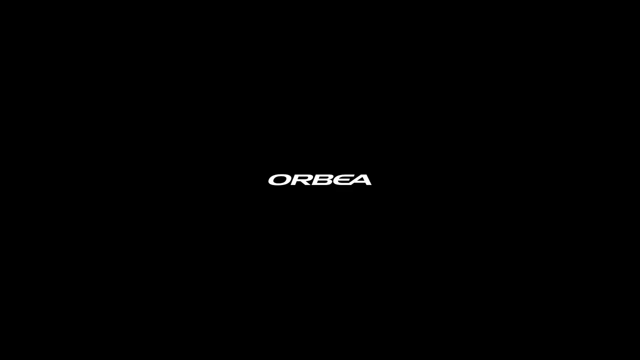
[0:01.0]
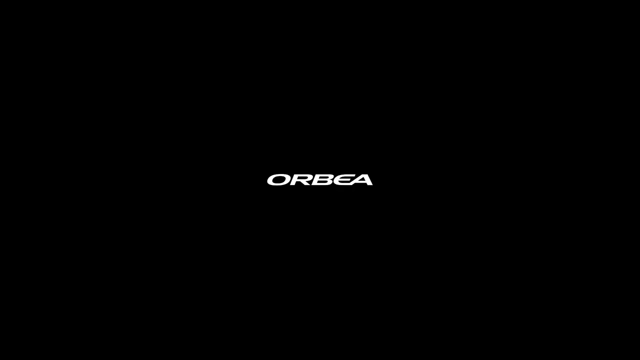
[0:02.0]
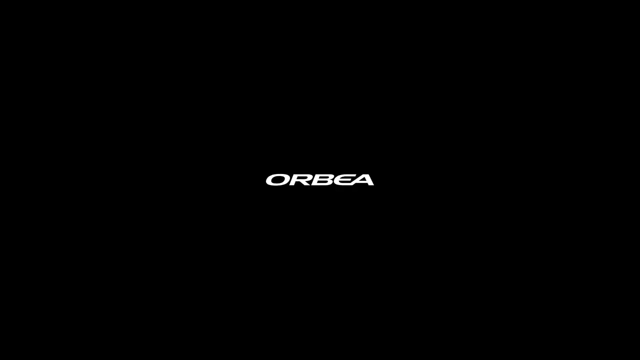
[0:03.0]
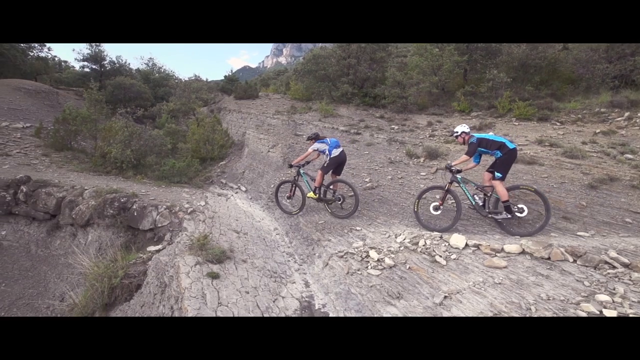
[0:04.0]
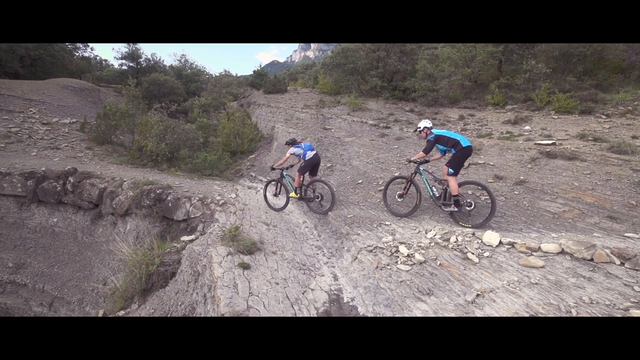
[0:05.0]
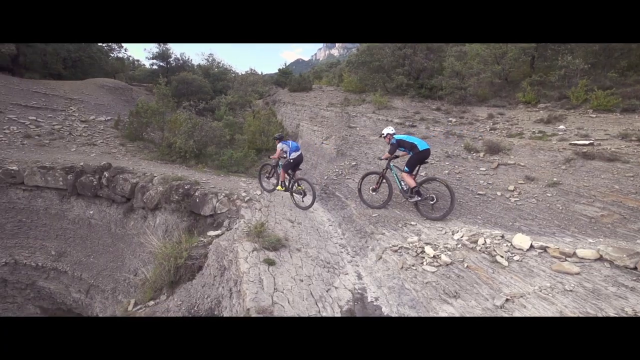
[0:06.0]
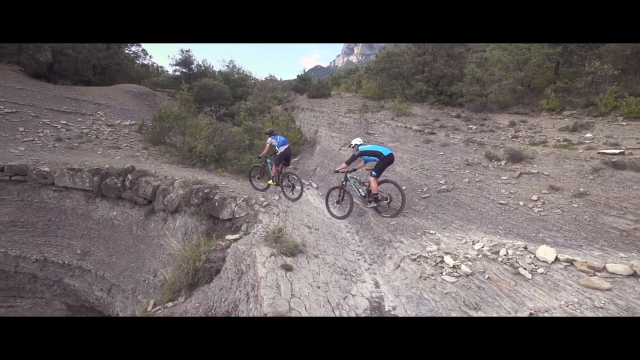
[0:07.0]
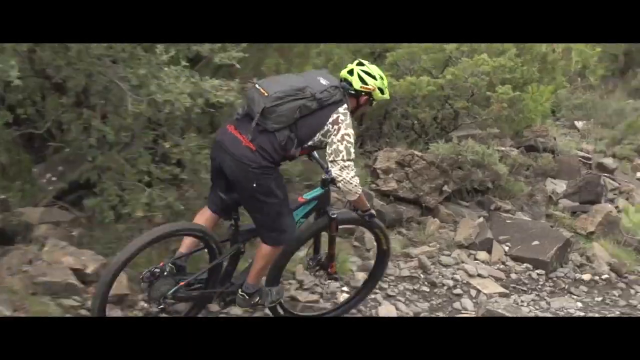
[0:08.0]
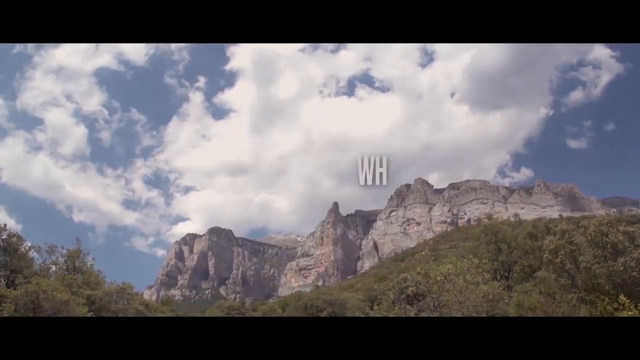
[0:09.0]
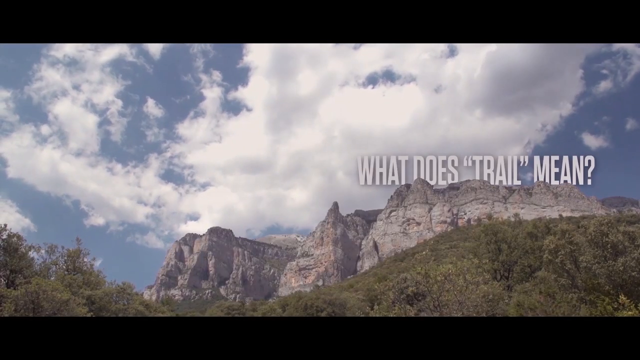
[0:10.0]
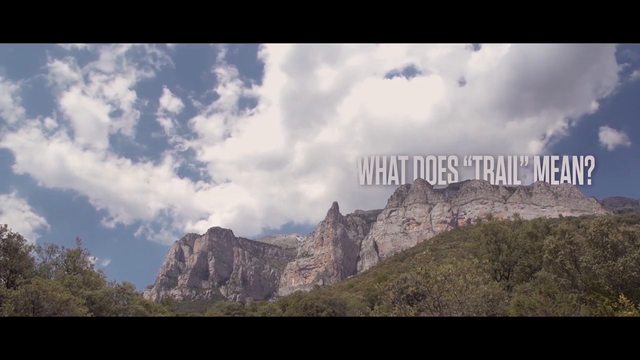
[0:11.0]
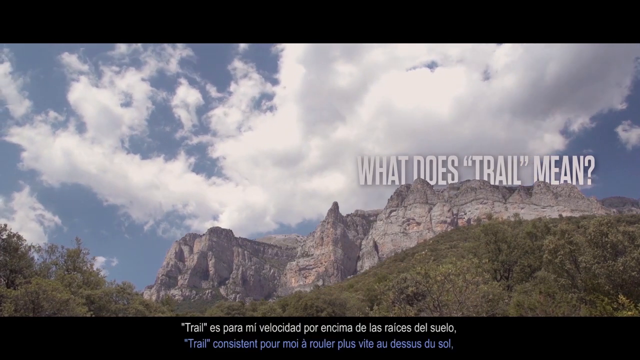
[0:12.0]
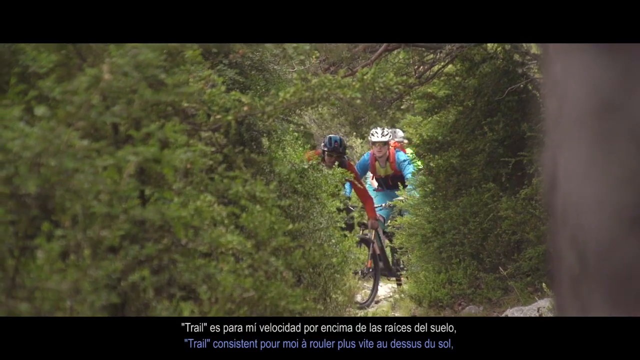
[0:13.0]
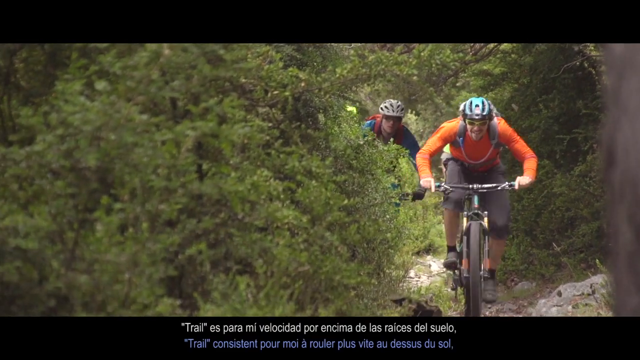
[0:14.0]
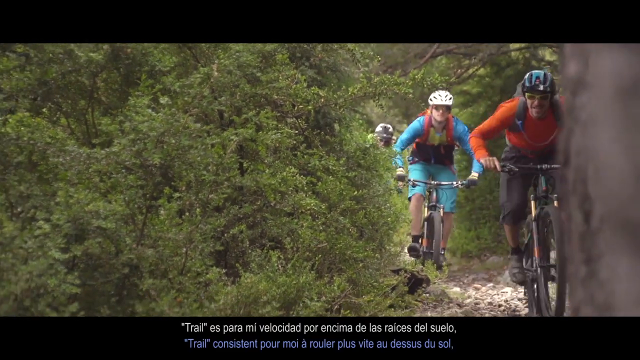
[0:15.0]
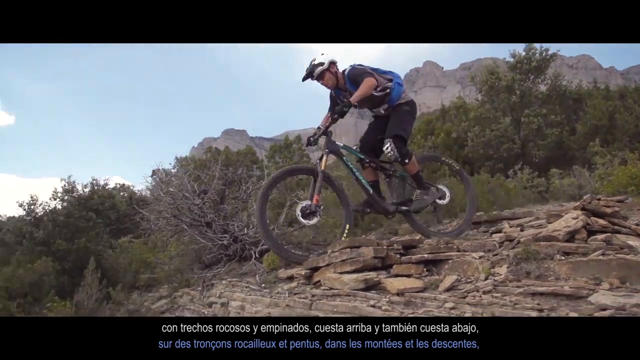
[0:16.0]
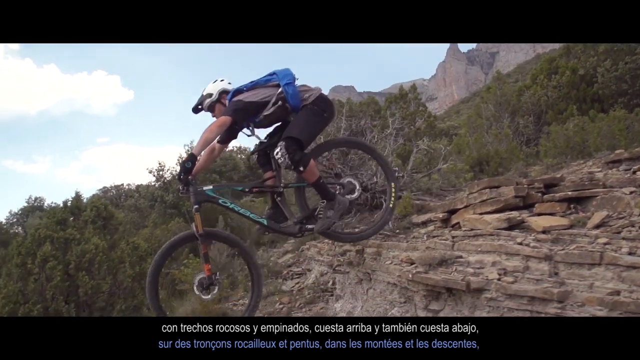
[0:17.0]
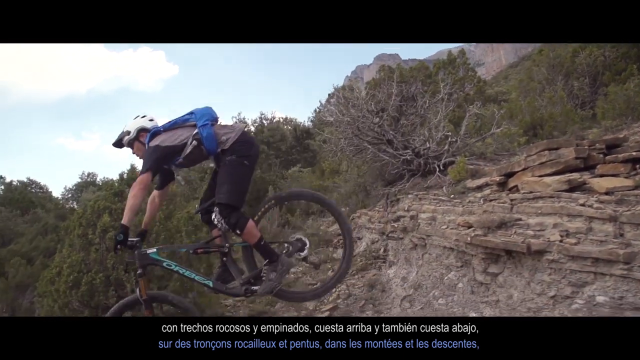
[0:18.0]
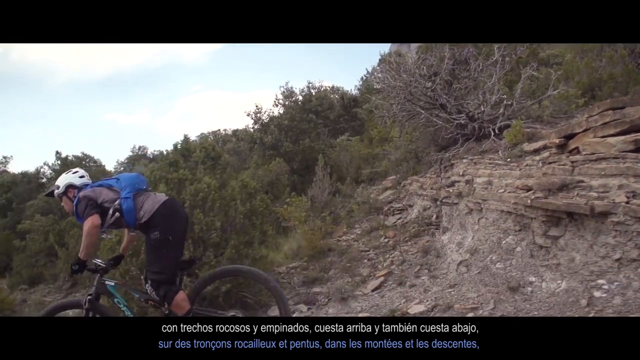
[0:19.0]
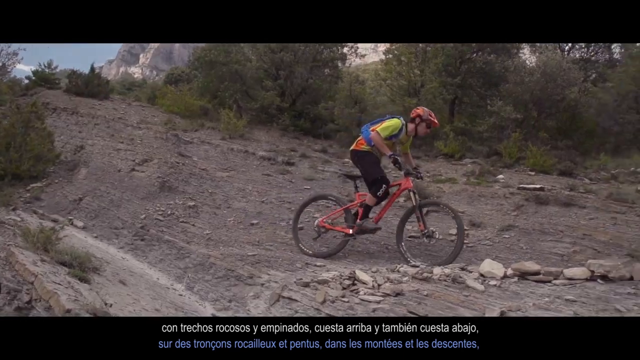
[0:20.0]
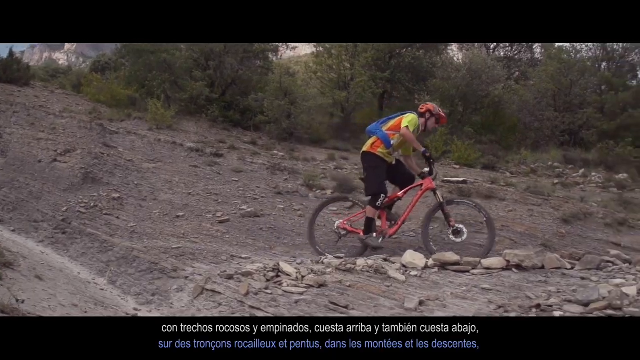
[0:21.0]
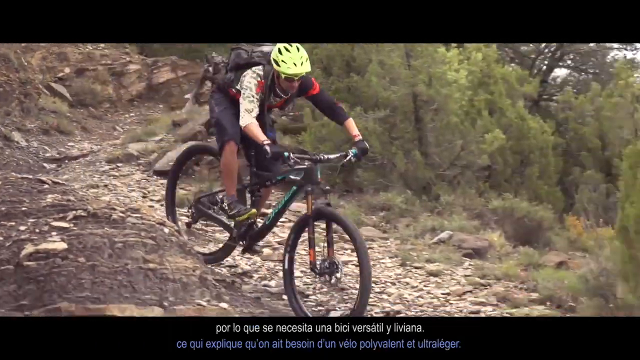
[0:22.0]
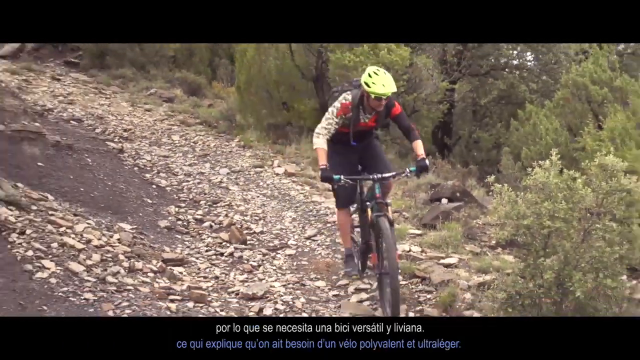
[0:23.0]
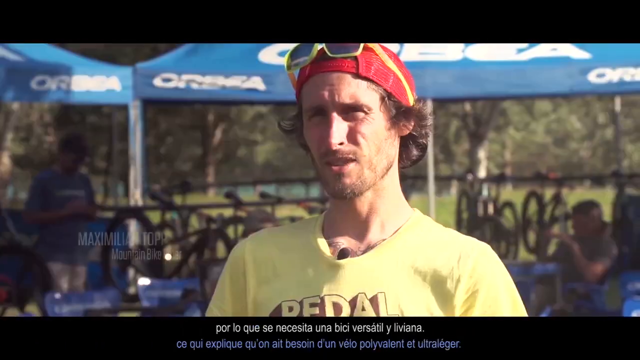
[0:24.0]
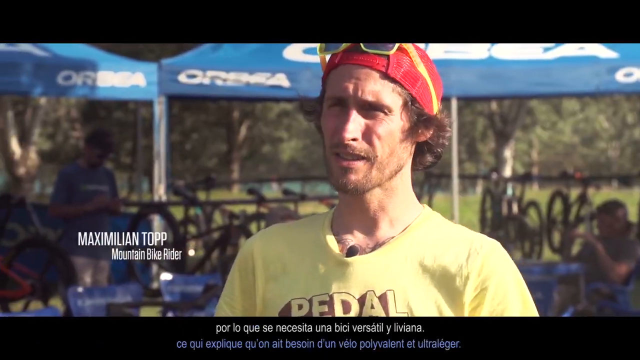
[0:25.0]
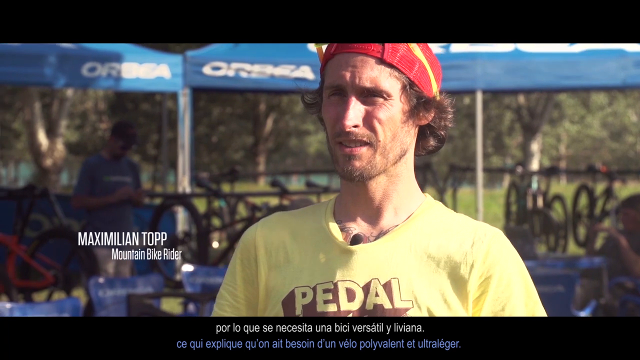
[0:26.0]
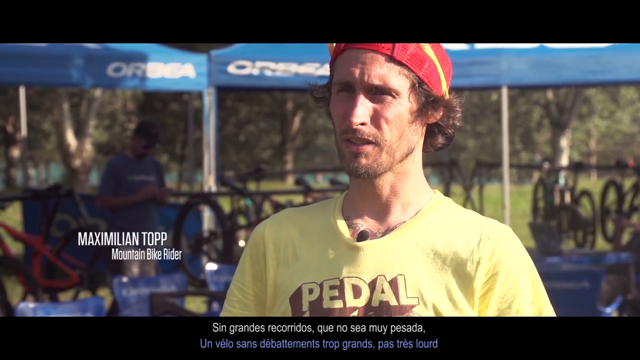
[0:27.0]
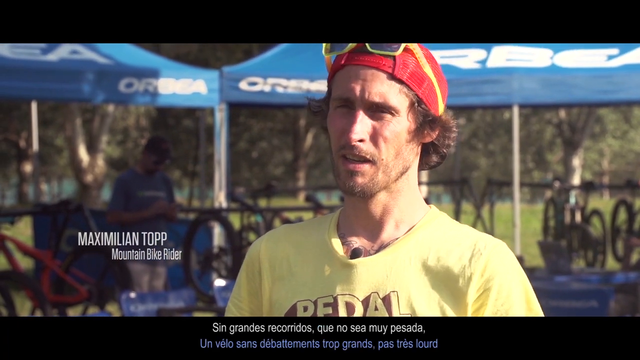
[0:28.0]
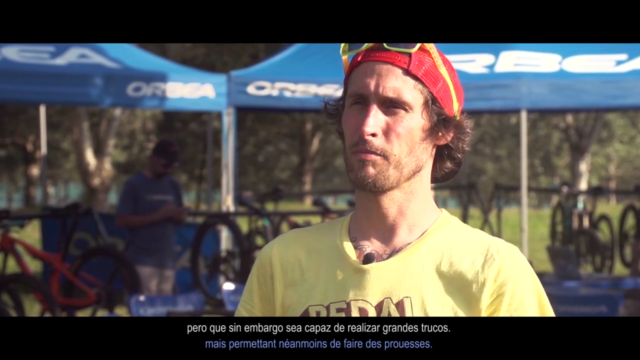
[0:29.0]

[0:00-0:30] The video opens on a black background with the text "Orbea". It stays up for a moment, then the video switches to people riding bikes on what looks like a mountain trail. Many action shots move around, followed by a shot of the sky with a ridge and the text "what does trail mean" across the top. The video returns to action shots of people riding their bikes over rough terrain, including slow-motion shots. Near the end, a man named Maximilian Top in a yellow shirt is talking. Many of the shots show nature: a mountain range or hiking trail with lots of pine trees, rocky ground and many loose stones. The riders wear helmets as they ride mountain bikes over very loose, unstable ground.